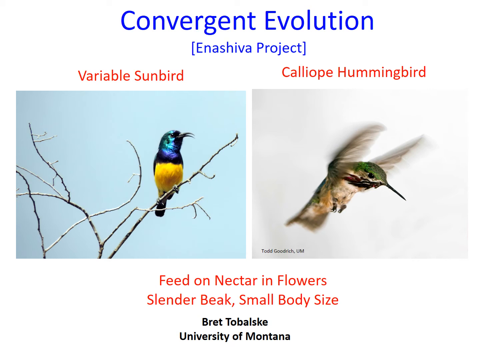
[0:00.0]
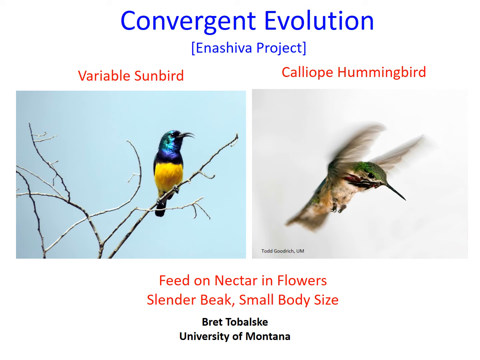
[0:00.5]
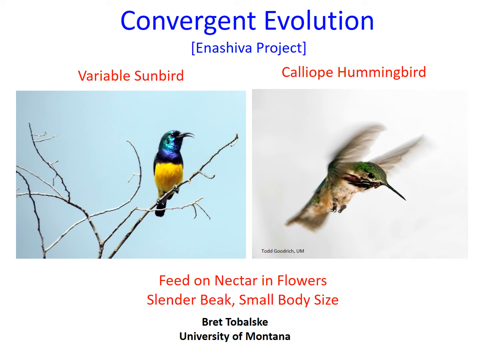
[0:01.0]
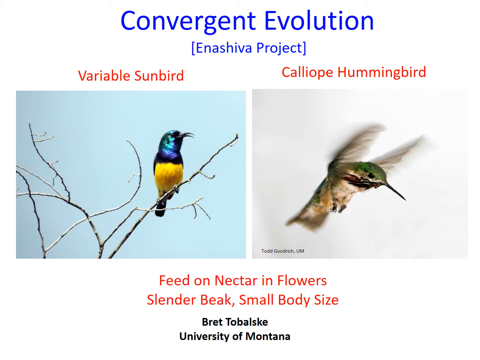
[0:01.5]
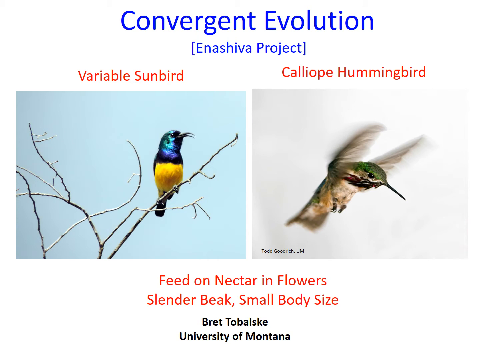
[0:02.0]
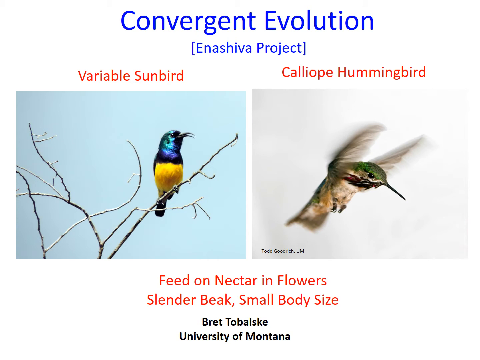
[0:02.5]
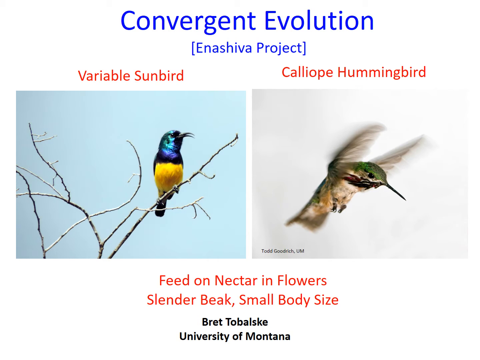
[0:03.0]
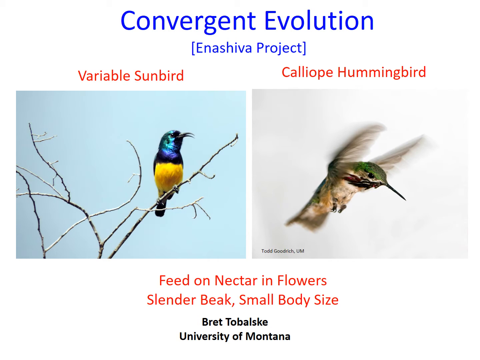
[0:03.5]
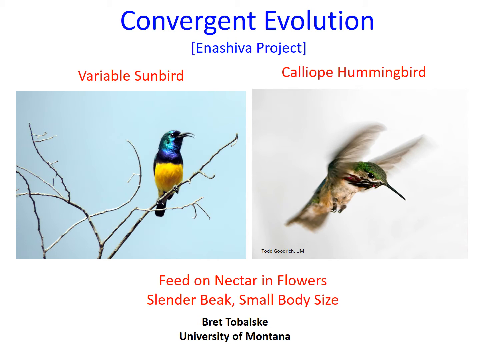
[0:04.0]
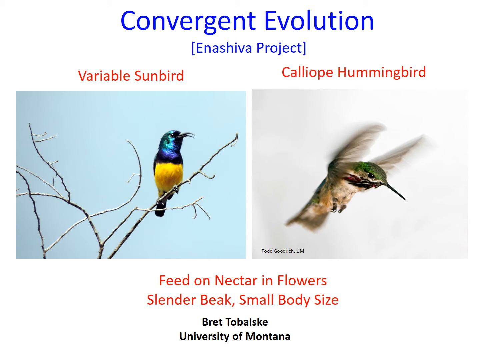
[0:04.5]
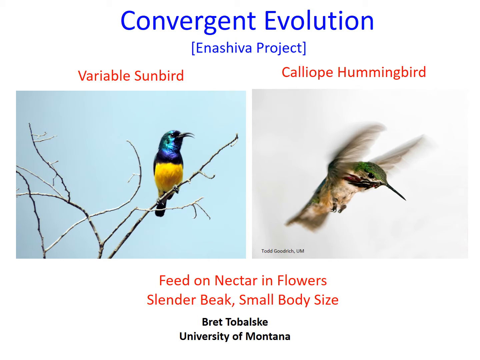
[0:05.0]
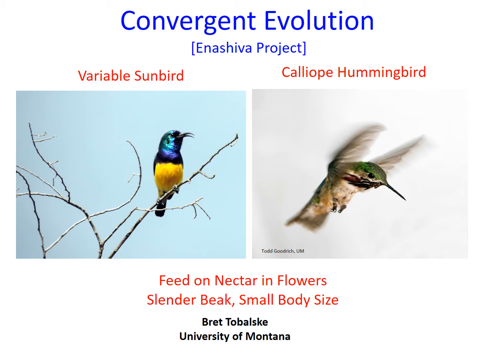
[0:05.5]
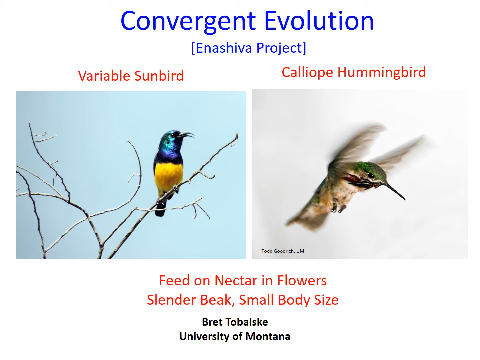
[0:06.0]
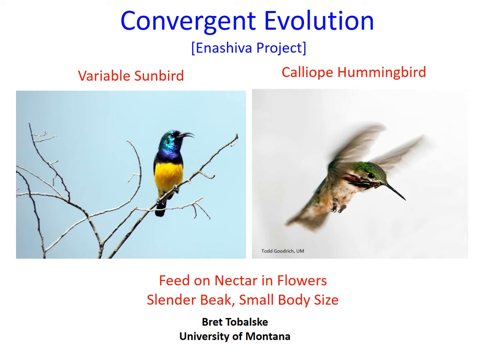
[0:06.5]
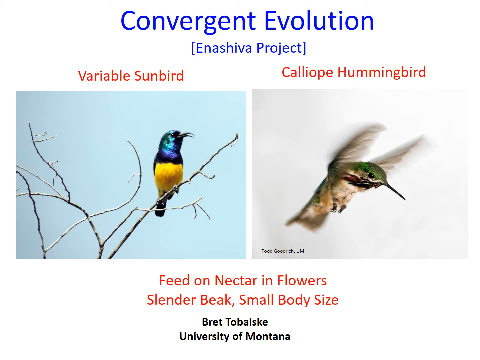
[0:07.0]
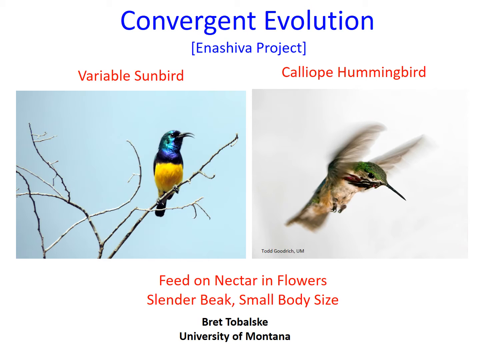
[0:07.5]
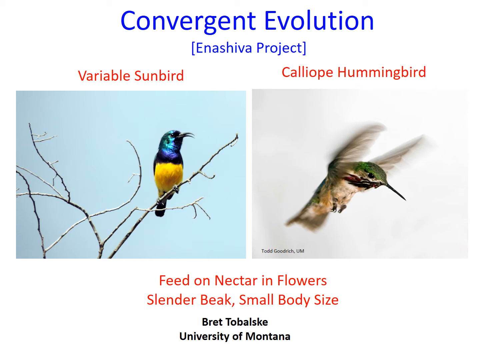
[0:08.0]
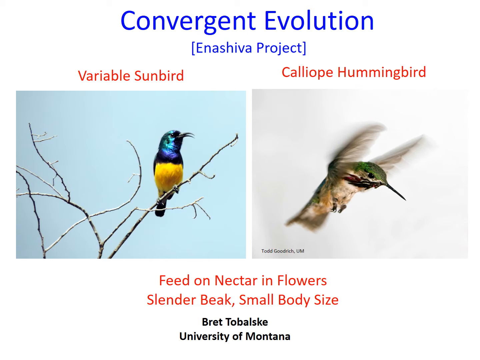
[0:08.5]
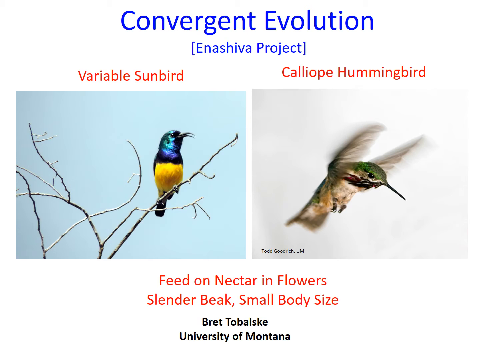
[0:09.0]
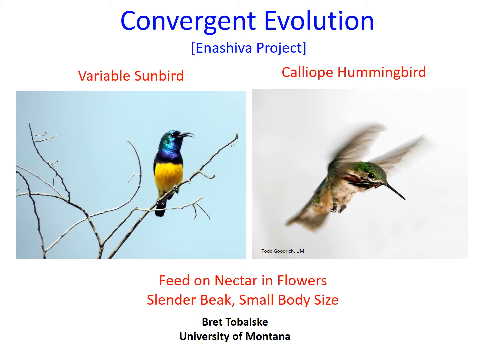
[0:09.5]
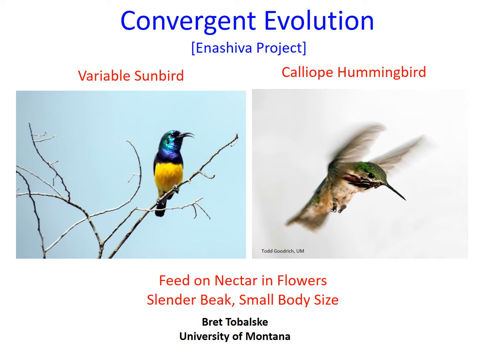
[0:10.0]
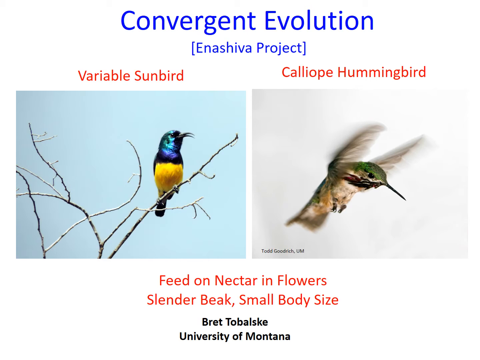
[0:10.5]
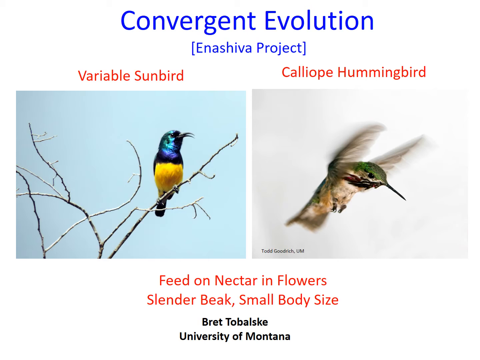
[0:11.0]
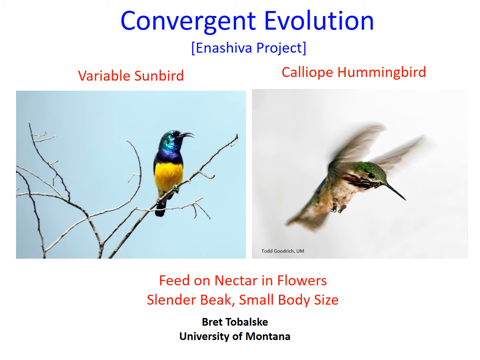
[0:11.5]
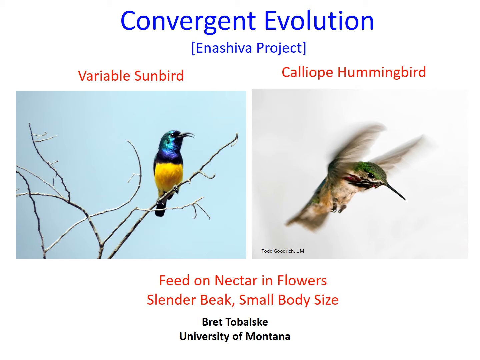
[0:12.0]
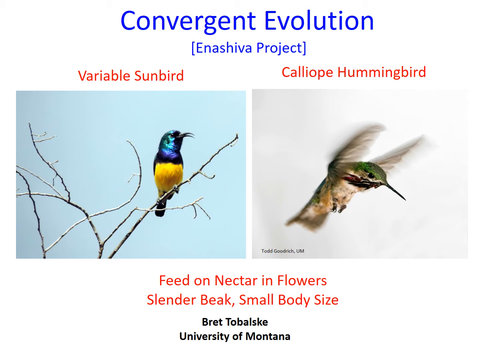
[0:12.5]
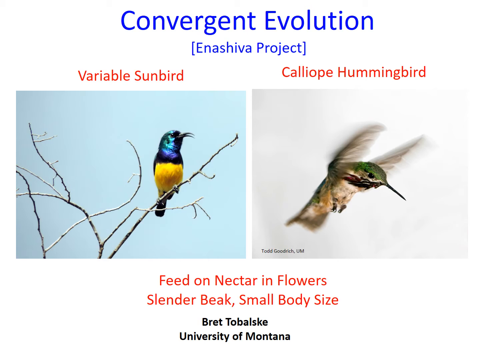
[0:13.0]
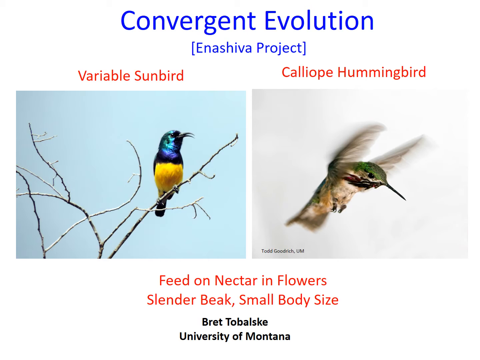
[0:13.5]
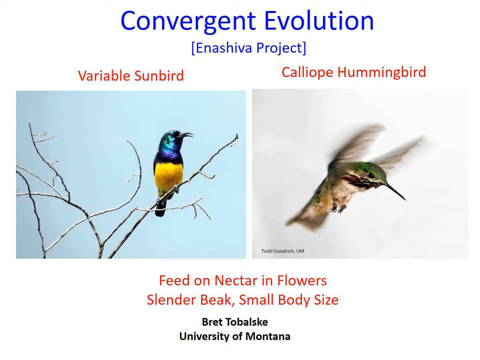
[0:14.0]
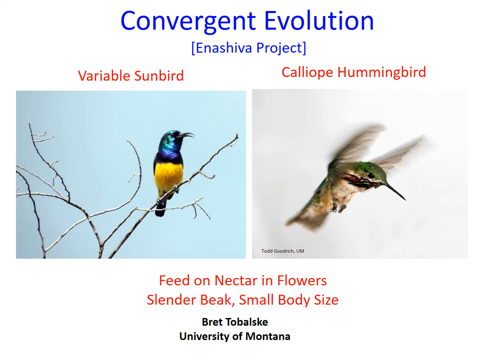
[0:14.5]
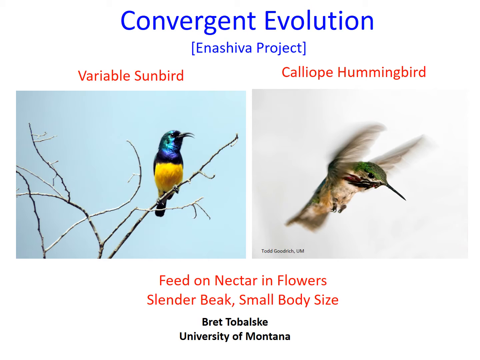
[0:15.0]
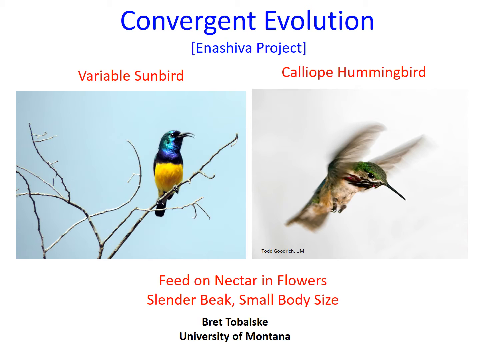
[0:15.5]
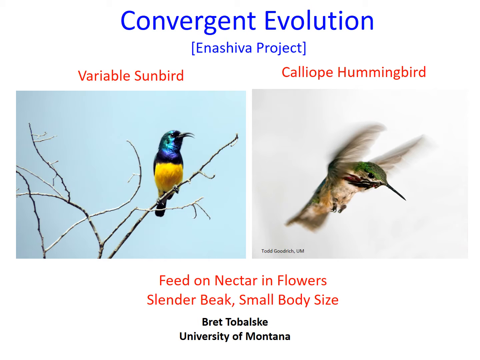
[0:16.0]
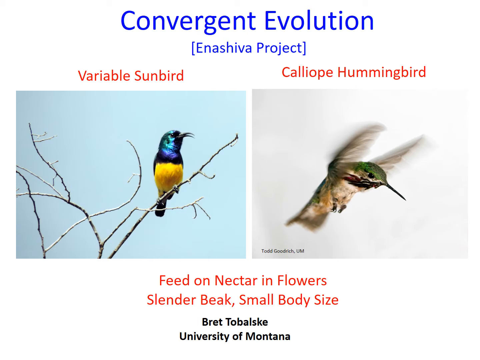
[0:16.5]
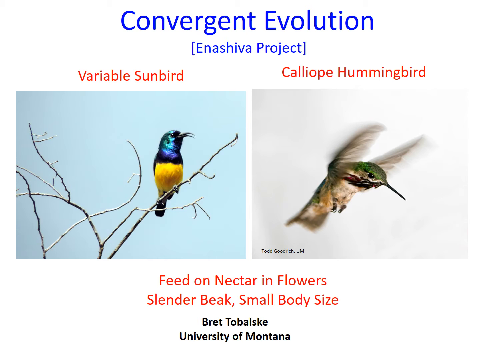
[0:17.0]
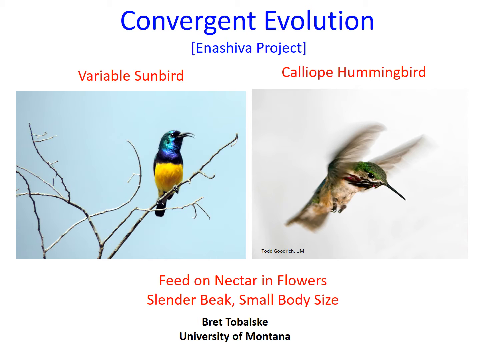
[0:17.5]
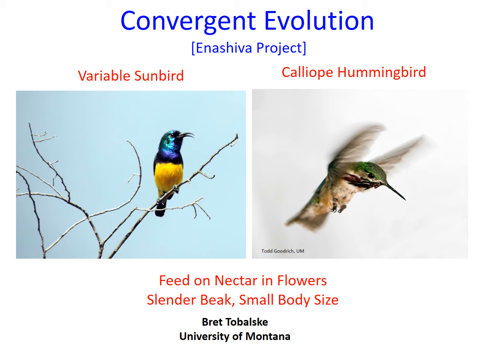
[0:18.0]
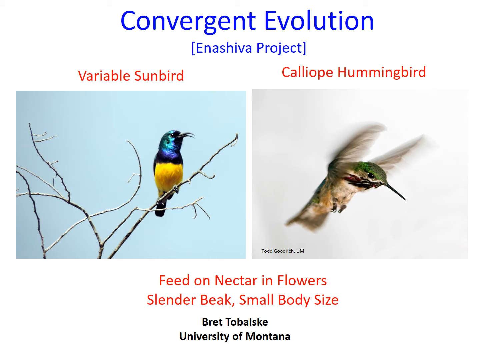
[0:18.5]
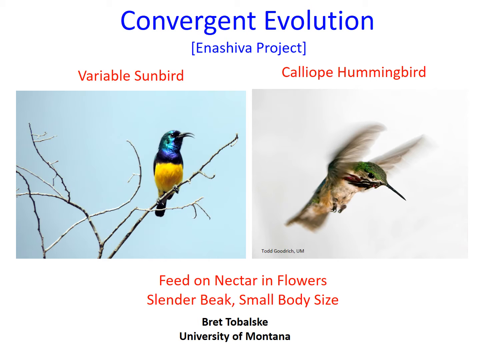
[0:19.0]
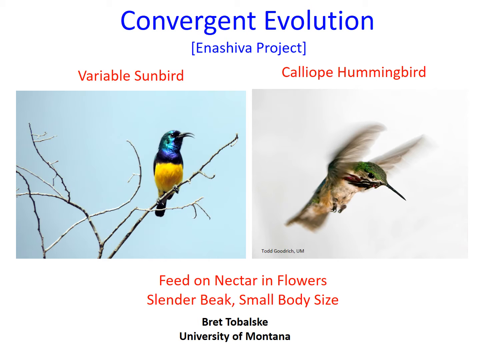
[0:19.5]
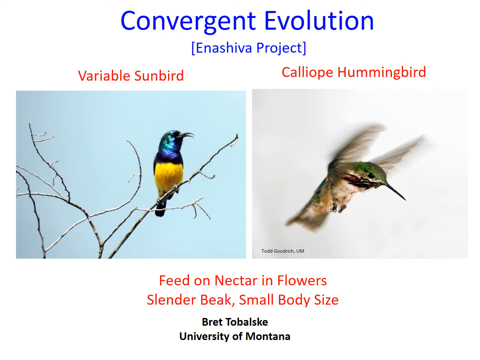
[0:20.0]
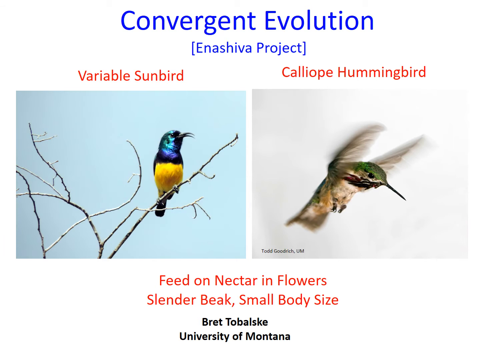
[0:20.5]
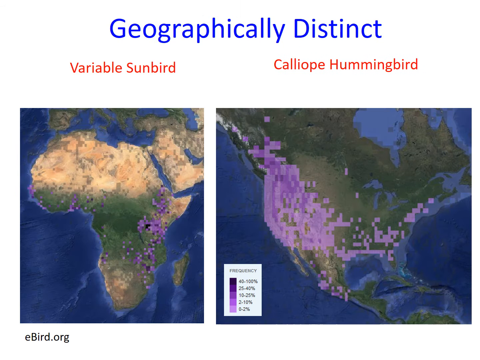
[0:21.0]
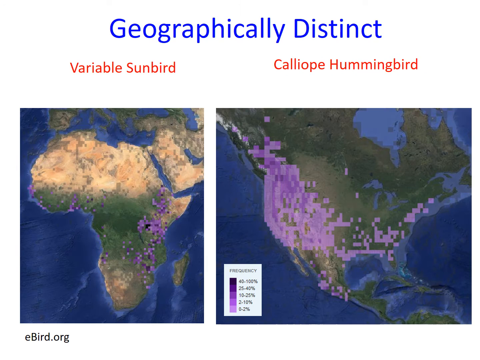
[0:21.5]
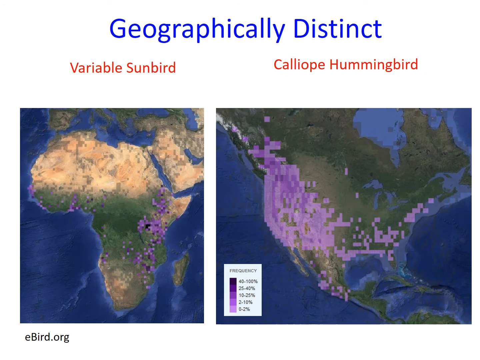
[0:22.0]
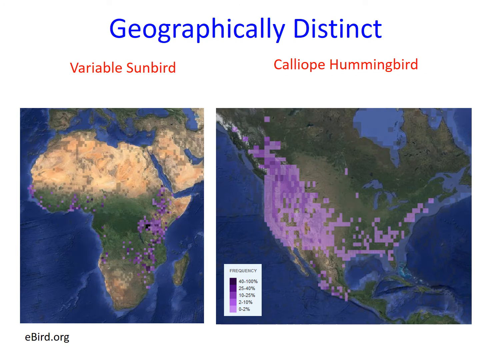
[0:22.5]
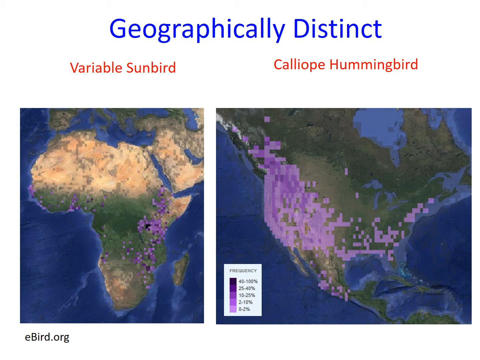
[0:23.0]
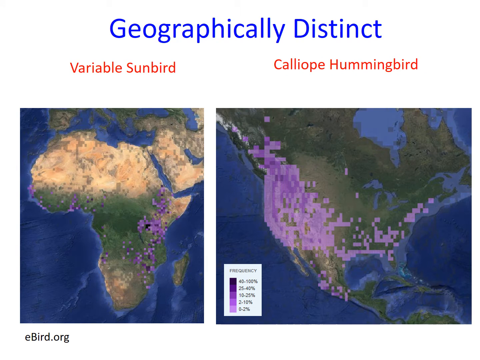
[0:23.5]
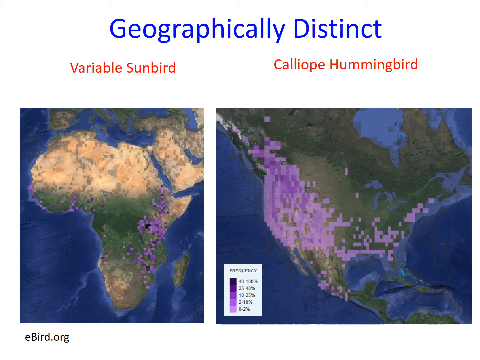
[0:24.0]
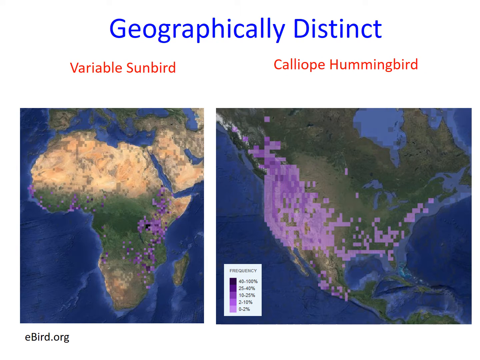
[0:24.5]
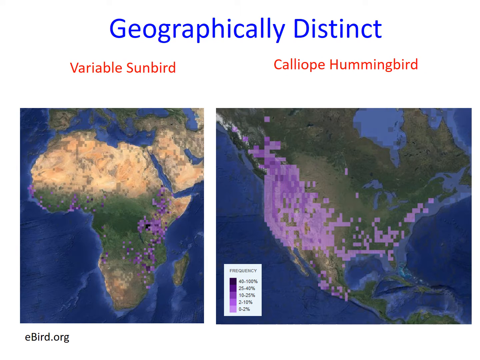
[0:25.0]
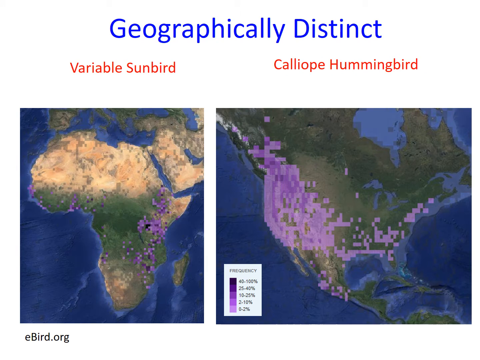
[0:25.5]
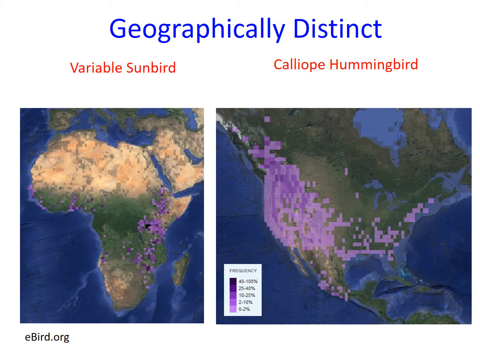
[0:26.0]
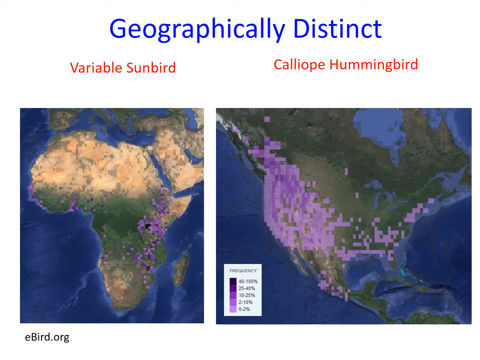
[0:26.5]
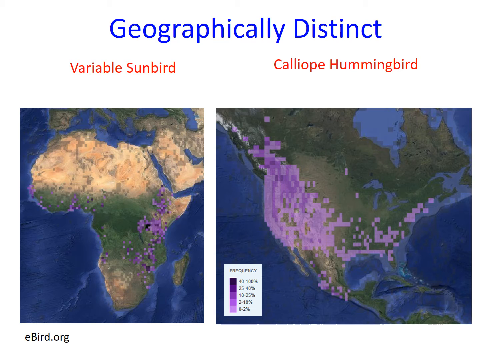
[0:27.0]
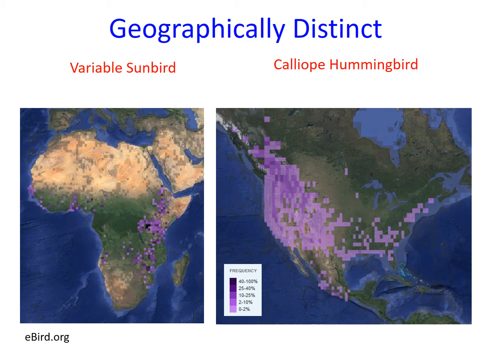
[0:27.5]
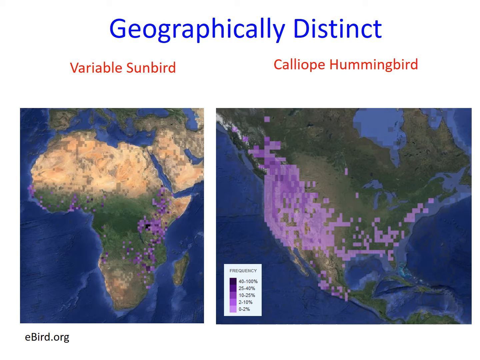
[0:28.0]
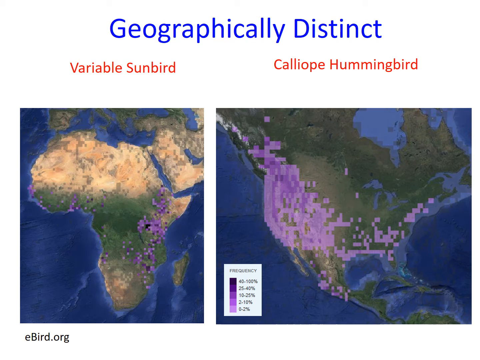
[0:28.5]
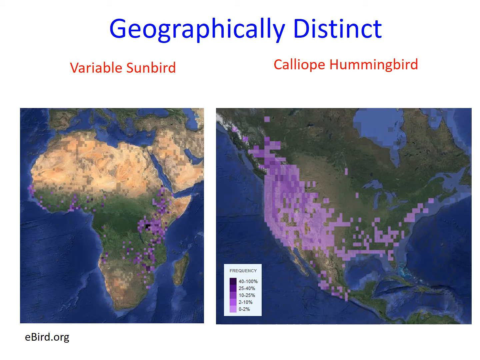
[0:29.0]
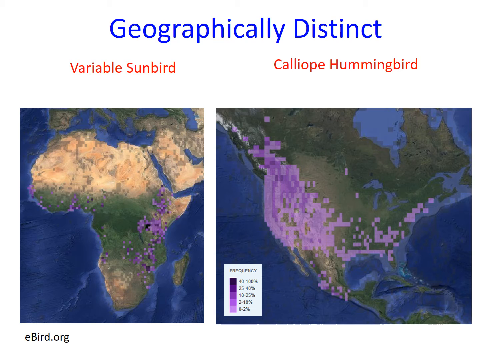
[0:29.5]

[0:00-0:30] The video shows a bird that is yellow and dark blue, the coloration of the variable sunbird, in the left-hand section of the screen. Text reads "variable sunbirds are native to regions of eastern Africa." The Calliope hummingbird, which is native to areas of North America, is also shown; it is green, in contrast to the yellow and blue variable sunbird. Text on the right reads "feed on nectar and flowers" and mentions small body size. The split screen compares the variable sunbird and the Calliope hummingbird side by side.